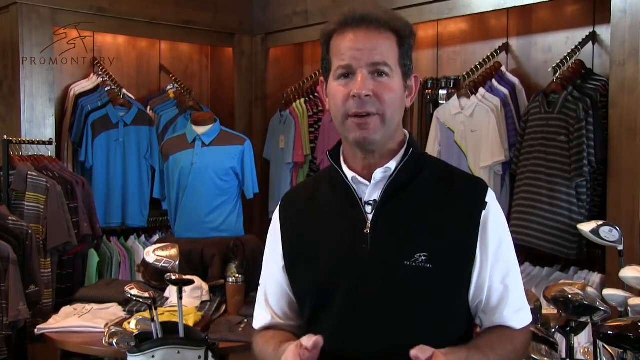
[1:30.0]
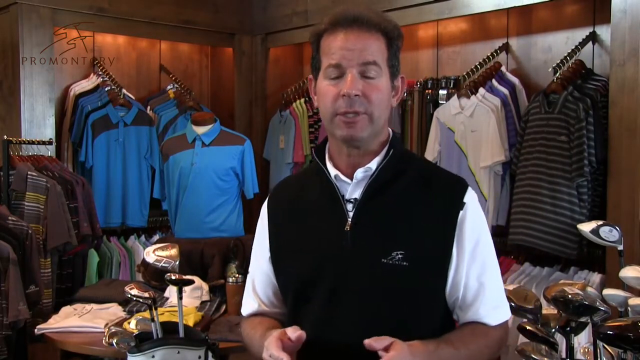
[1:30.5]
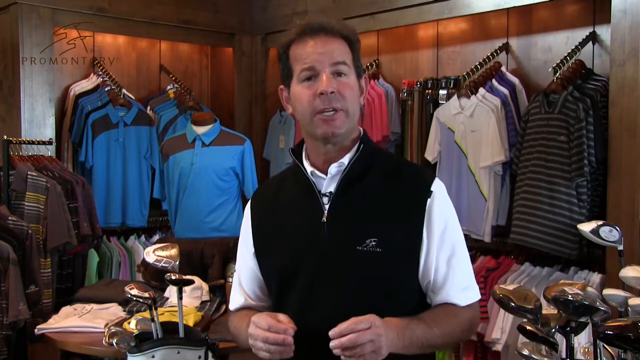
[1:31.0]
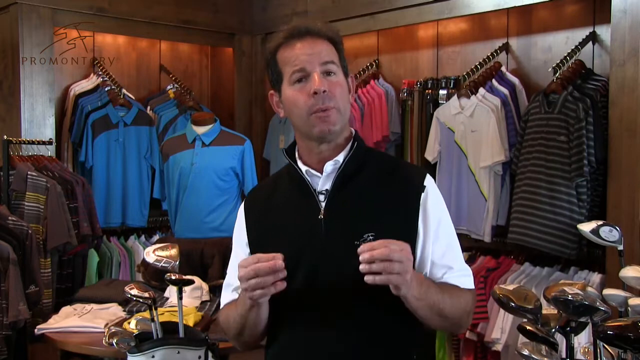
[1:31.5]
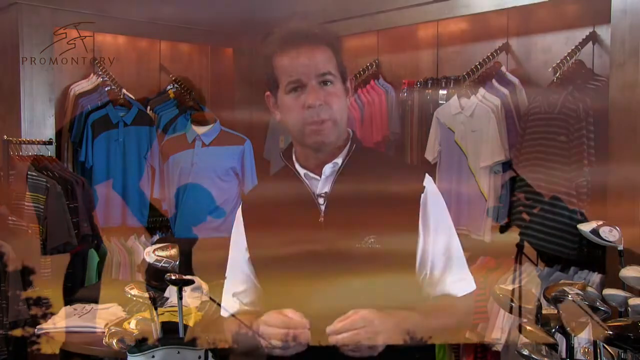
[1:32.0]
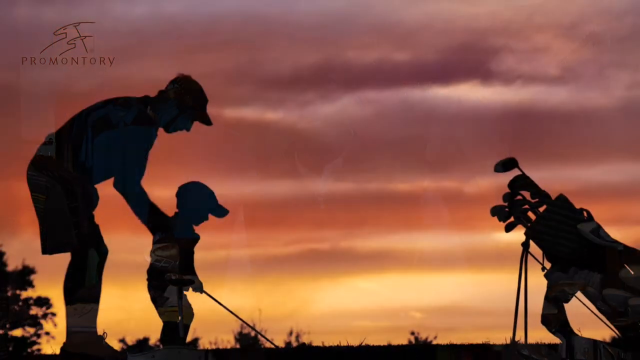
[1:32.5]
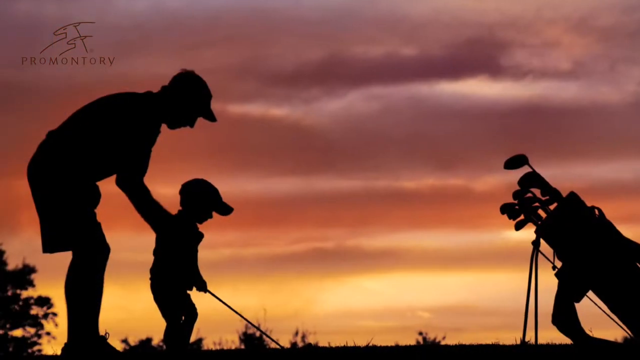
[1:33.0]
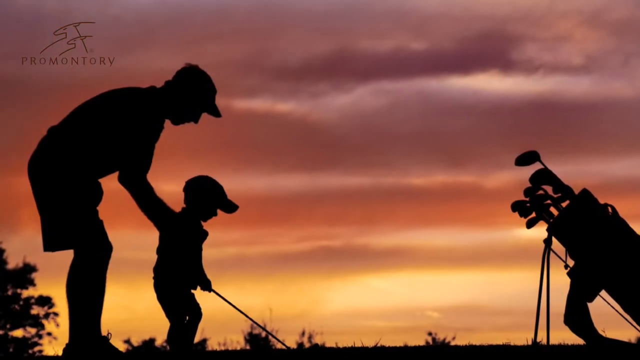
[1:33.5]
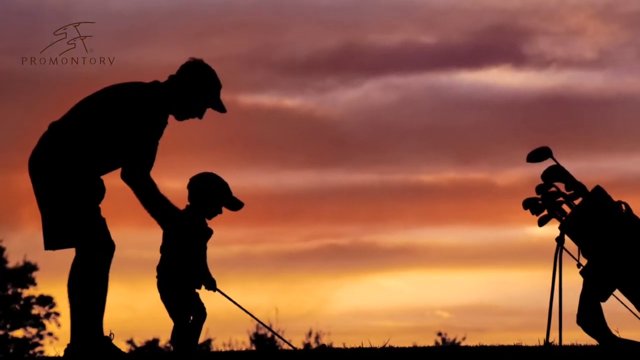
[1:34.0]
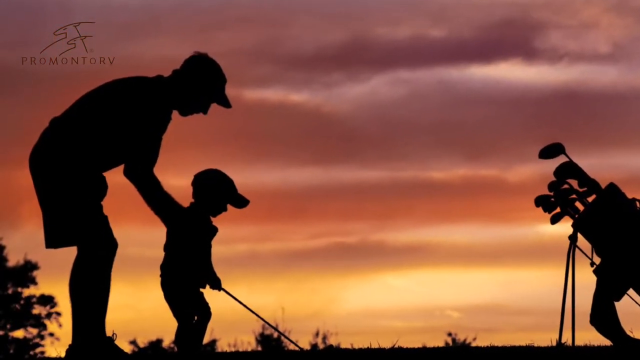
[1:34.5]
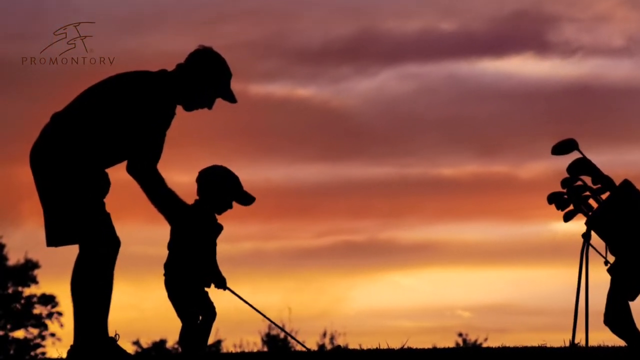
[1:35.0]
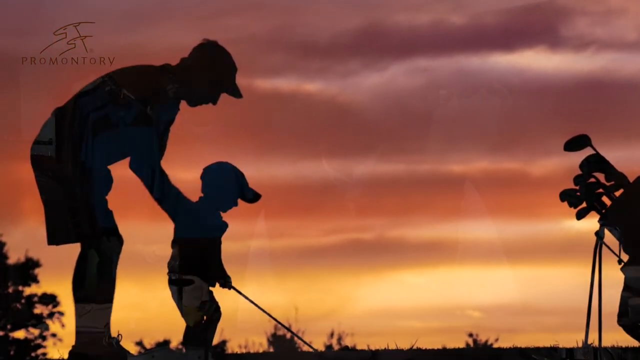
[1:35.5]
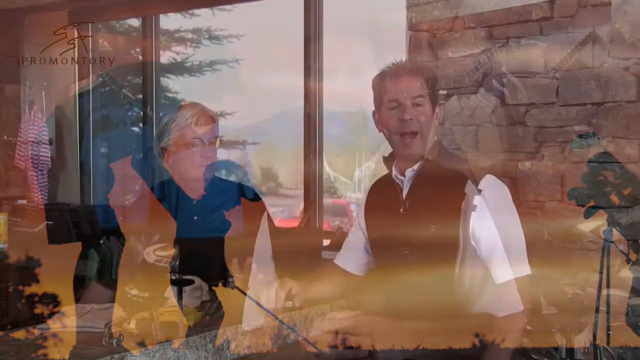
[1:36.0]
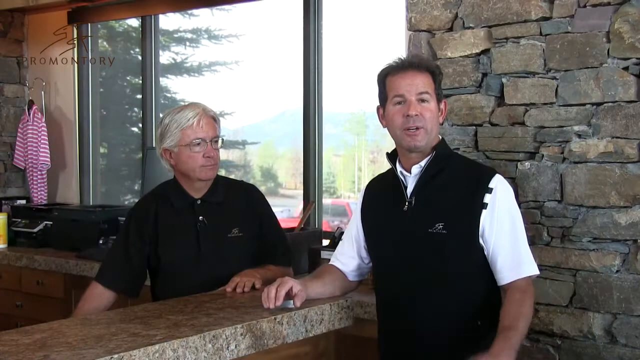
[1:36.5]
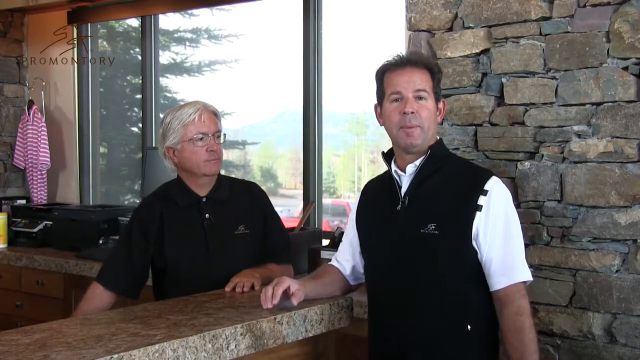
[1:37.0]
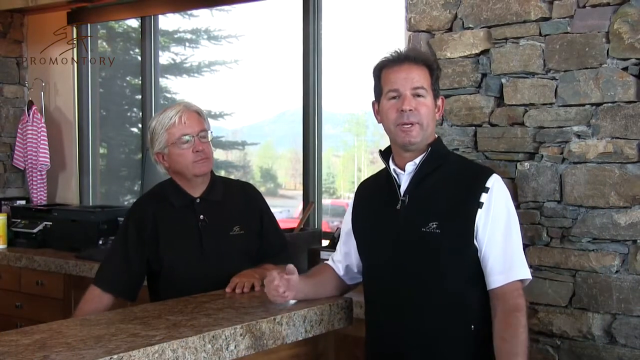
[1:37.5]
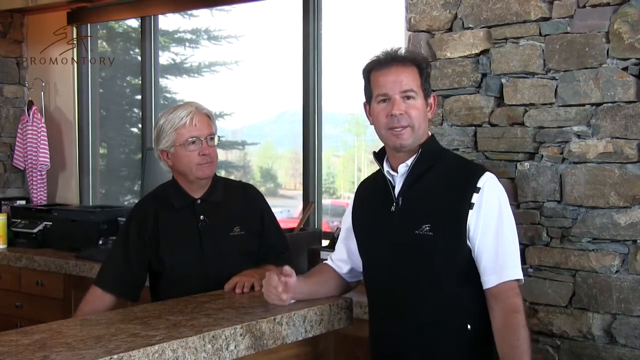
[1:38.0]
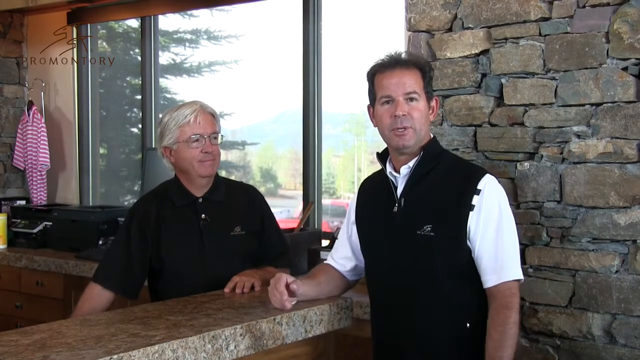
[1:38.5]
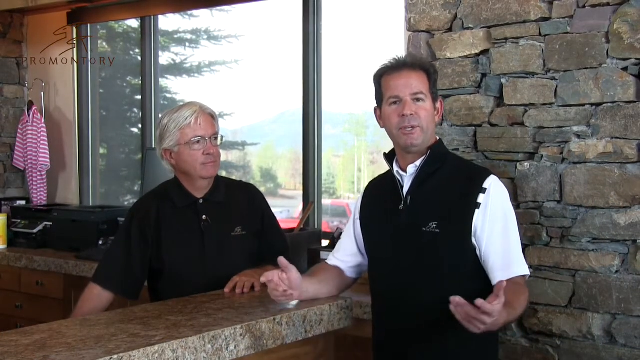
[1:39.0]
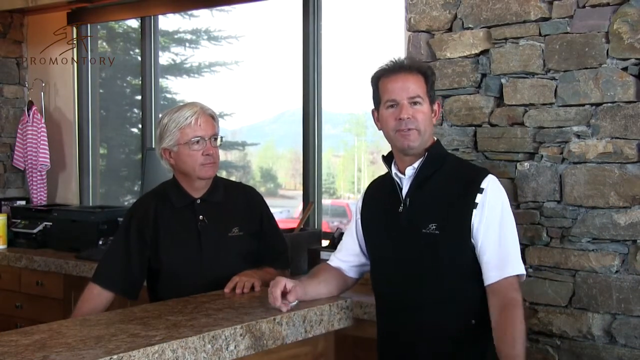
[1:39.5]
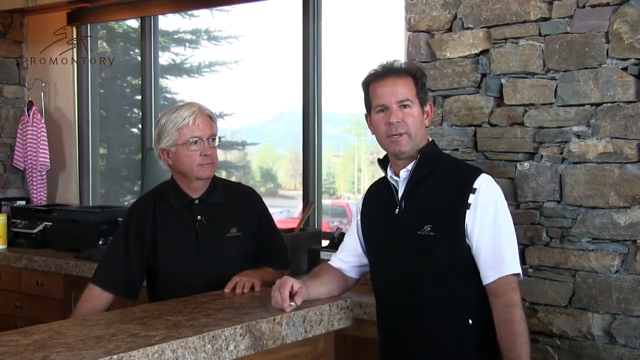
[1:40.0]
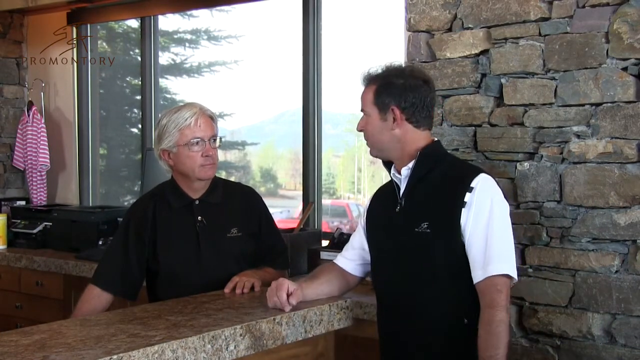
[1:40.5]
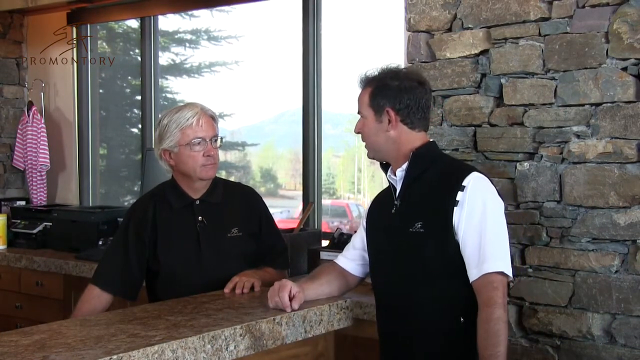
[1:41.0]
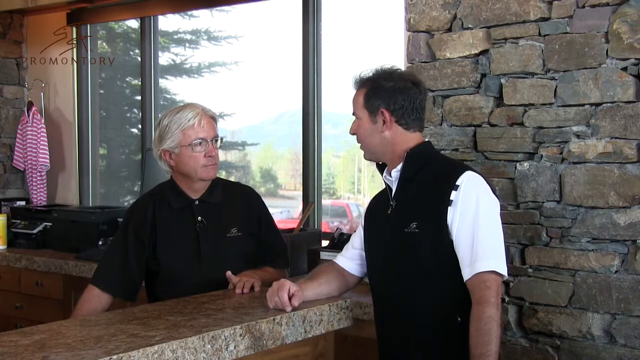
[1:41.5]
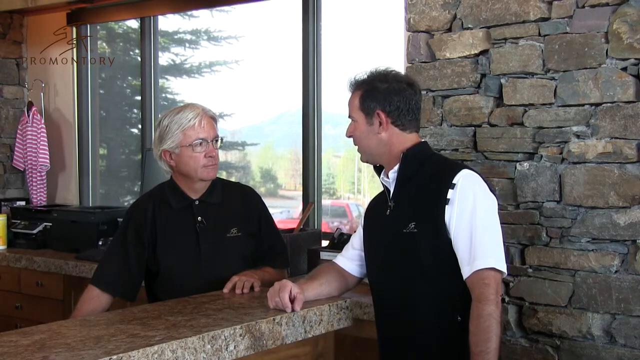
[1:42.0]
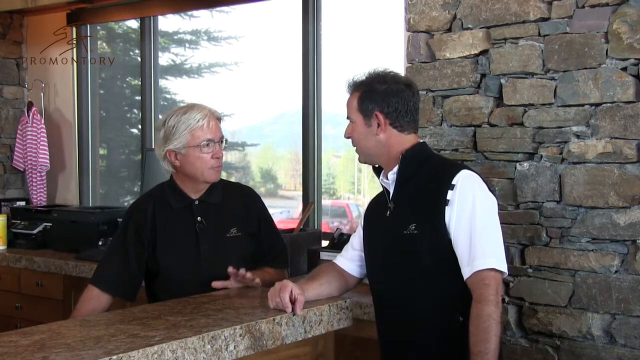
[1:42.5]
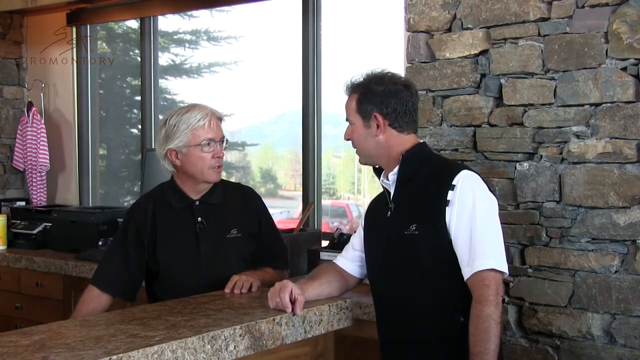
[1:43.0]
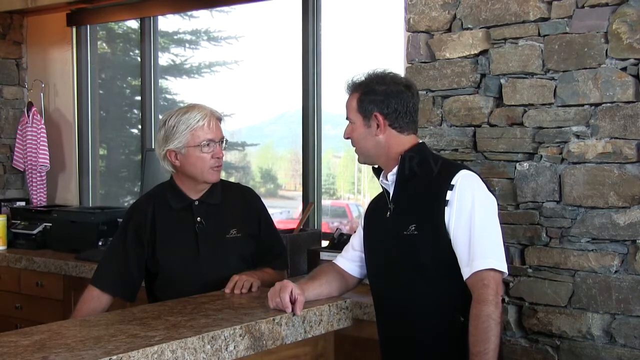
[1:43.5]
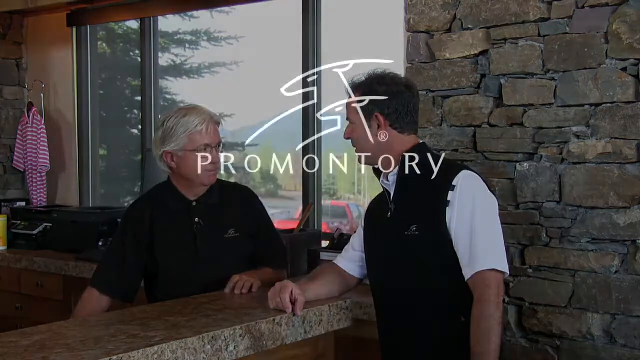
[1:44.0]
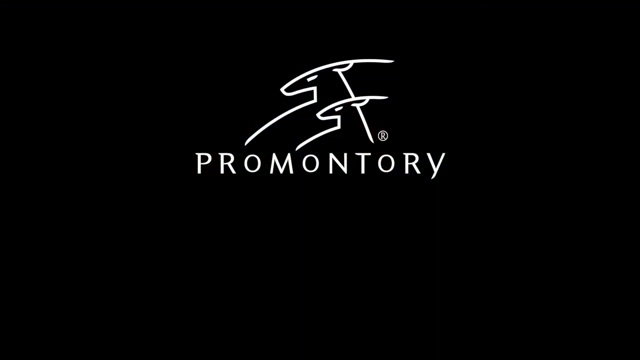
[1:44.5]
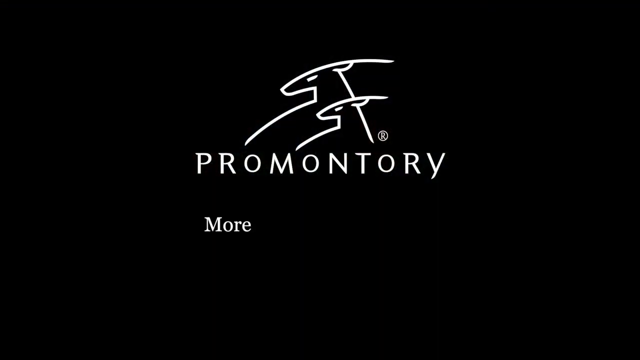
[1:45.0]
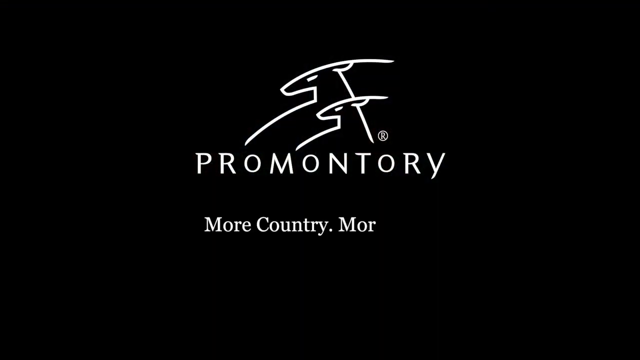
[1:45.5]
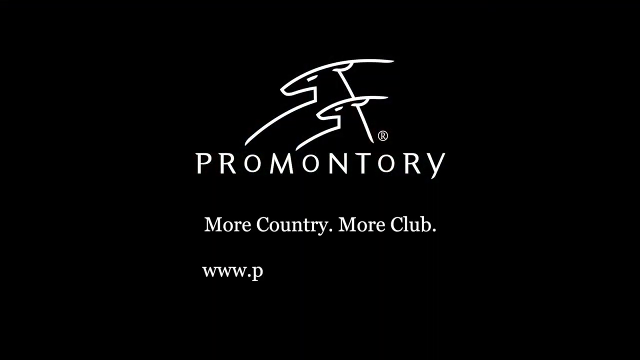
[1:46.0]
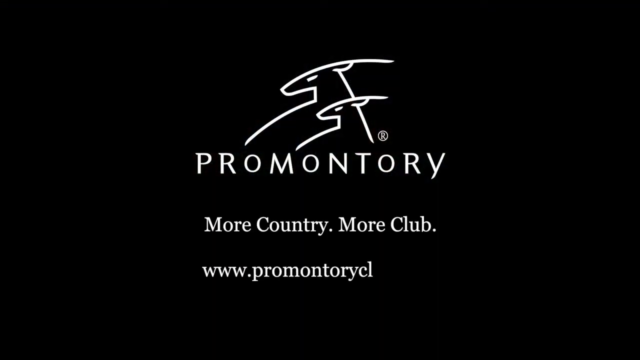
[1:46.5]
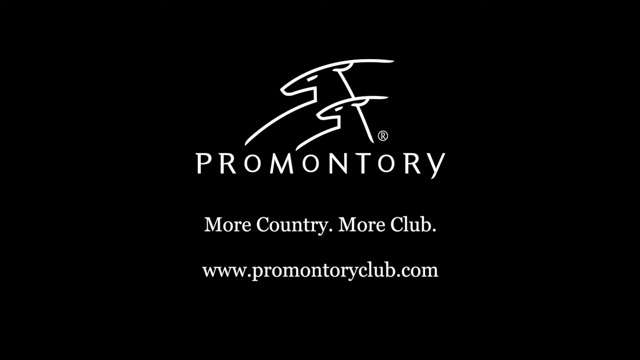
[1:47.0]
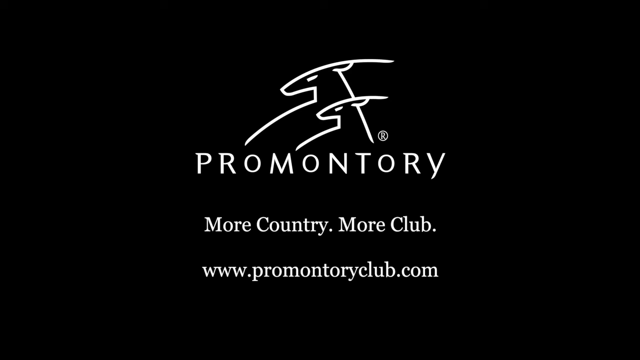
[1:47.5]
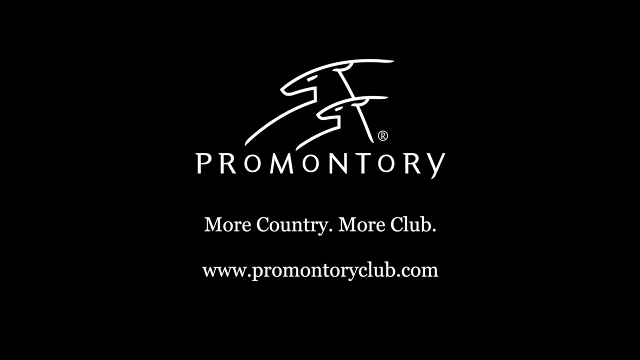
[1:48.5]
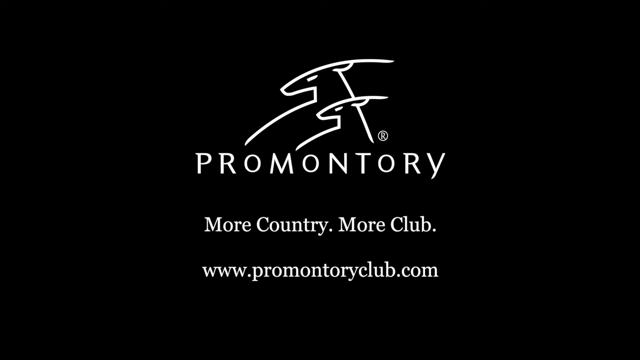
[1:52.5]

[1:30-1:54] The man in the gift shop continues to talk to the camera. Polos are on display in the background: one blue, one black and white, one pale blue, and one purple and white. He is surrounded by golf clubs, wears a white shirt and a black vest, and is Caucasian. The view turns to a silhouette of a father helping a little boy with golf against a sunset sky. Both are bent over, the father has his hands on the boy's shoulders, both wear baseball caps or golf caps, and they appear to be wearing shorts. They are all black in silhouette, and their bag of golf clubs on the right side is also a silhouette. The sky behind them is purple, orange, yellow, and brown, evoking a sunset. Next, the man from the gift shop talks against a large stone wall next to a huge window with another man, who is Caucasian with glasses and whitish hair and wears a black polo; they seem to be discussing golf. At the very end, a black screen says "Promontory, more country, more club, www.promontoryclub.com", with the word "PROMONTORY" in all caps and what might be the silhouette of a mountain goat sketched in white.